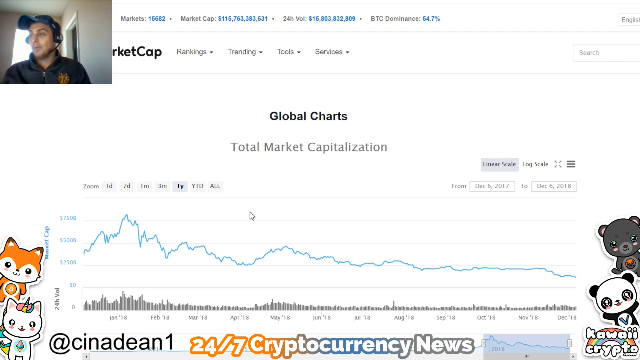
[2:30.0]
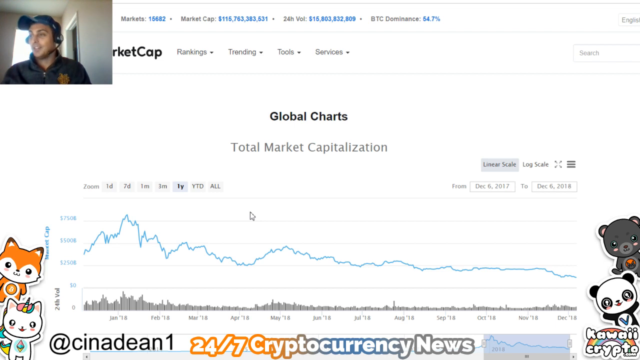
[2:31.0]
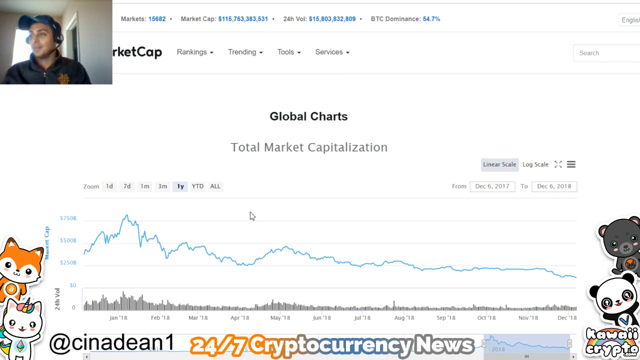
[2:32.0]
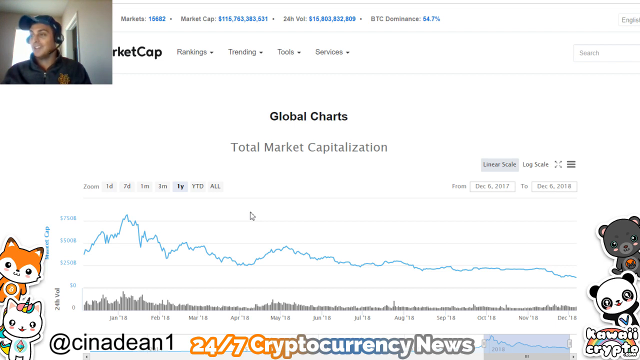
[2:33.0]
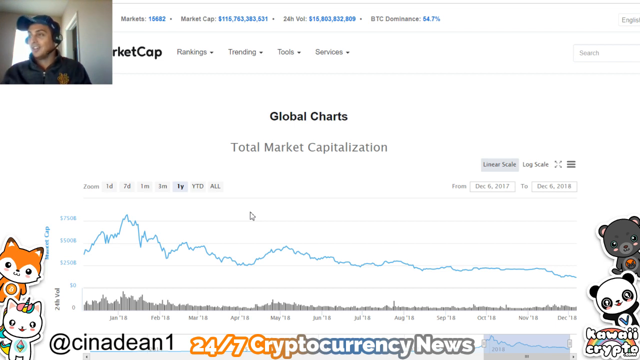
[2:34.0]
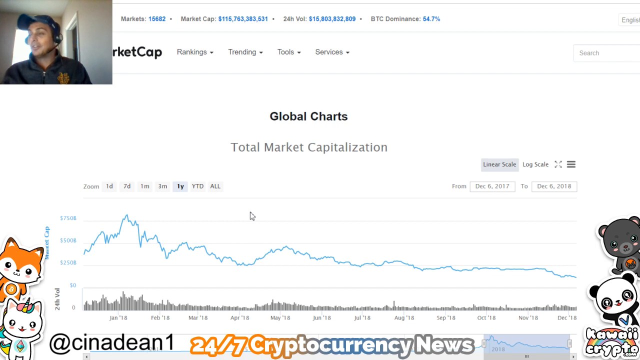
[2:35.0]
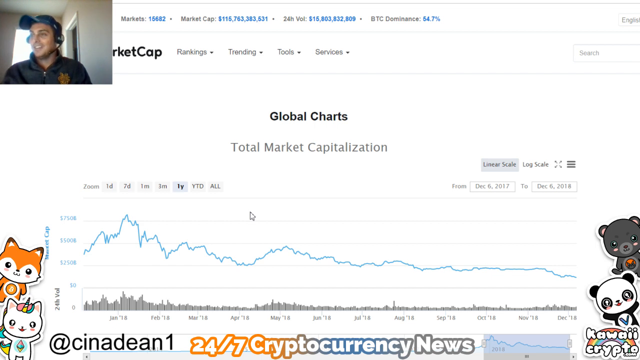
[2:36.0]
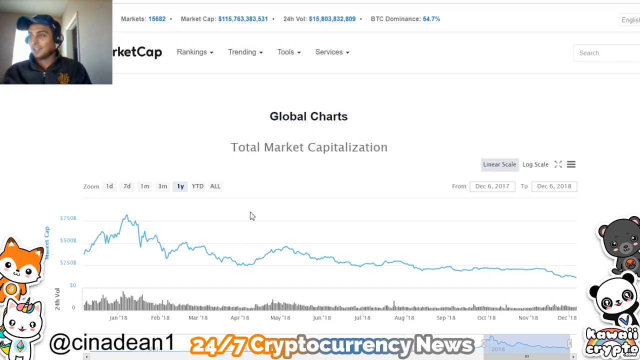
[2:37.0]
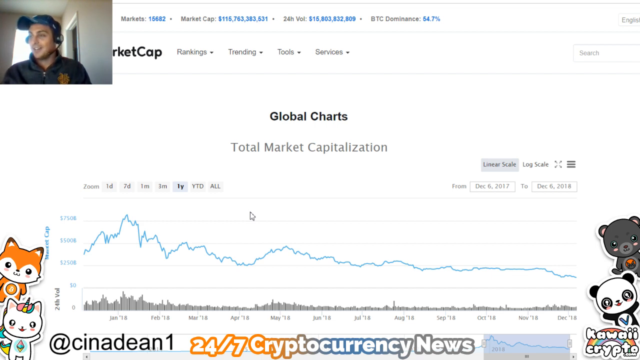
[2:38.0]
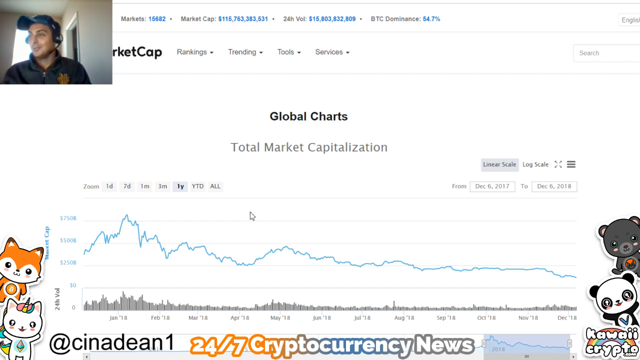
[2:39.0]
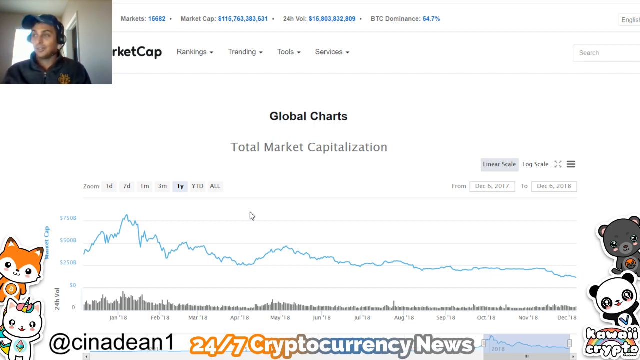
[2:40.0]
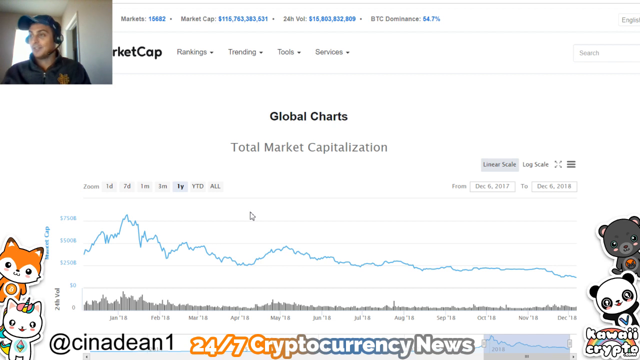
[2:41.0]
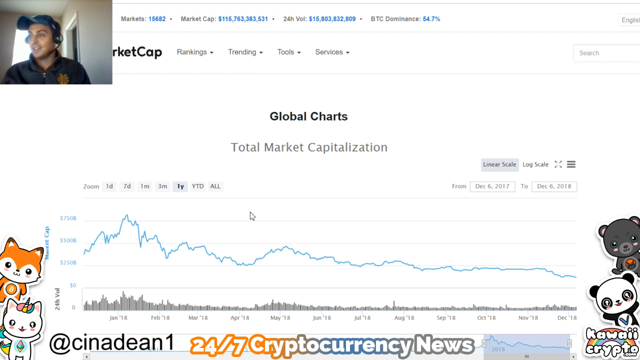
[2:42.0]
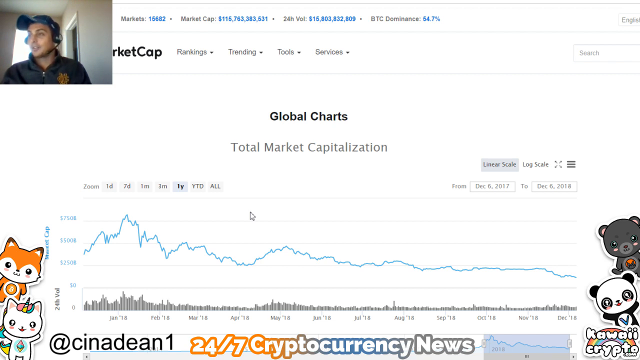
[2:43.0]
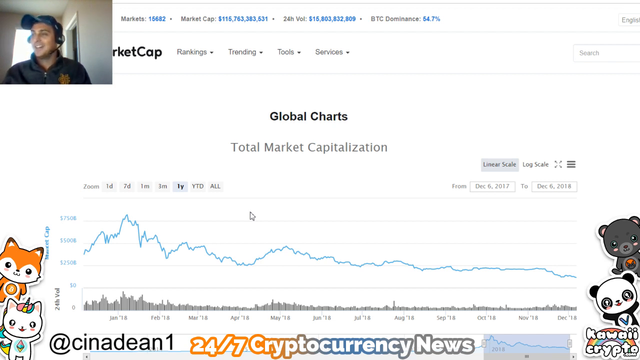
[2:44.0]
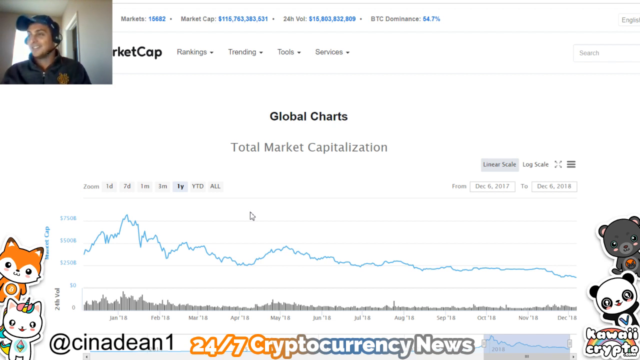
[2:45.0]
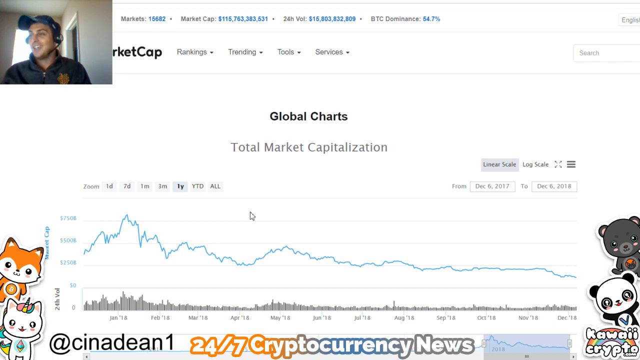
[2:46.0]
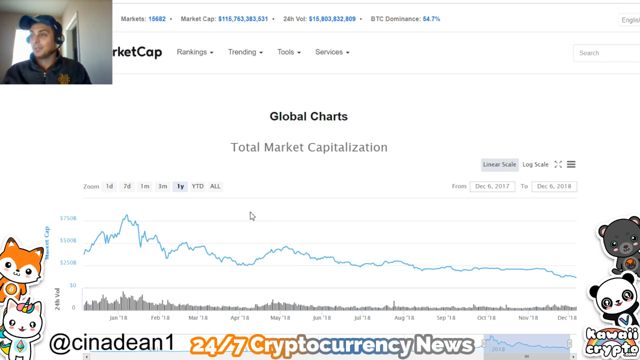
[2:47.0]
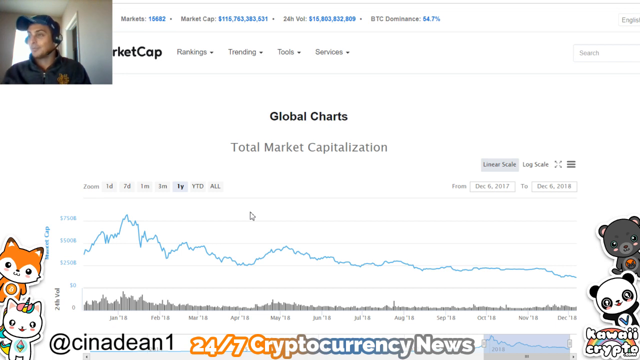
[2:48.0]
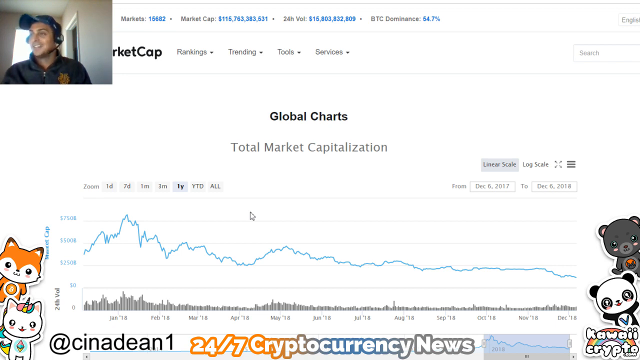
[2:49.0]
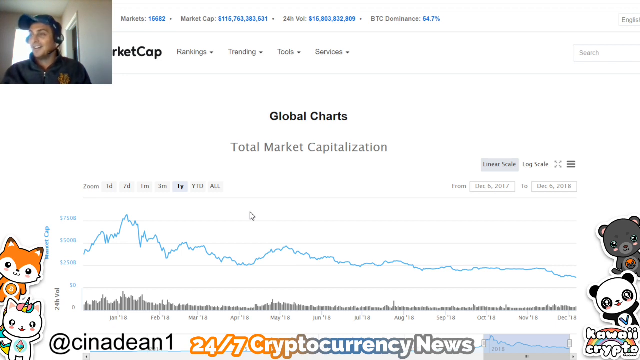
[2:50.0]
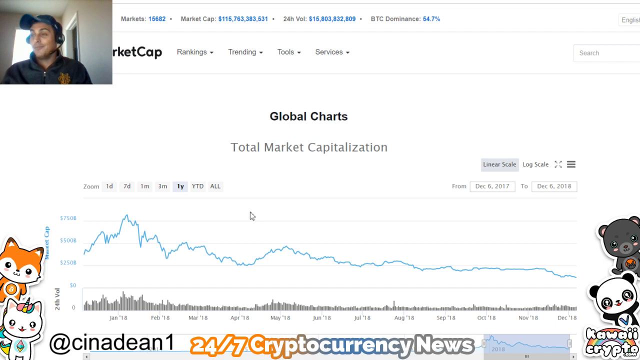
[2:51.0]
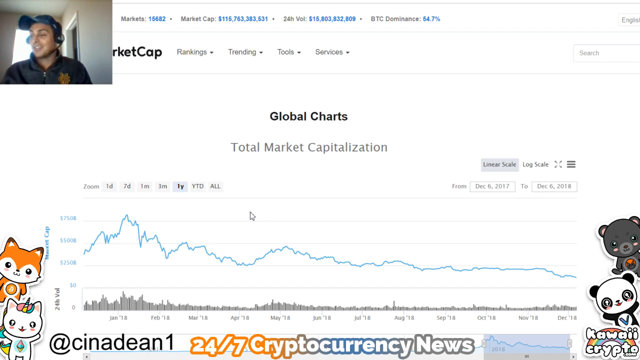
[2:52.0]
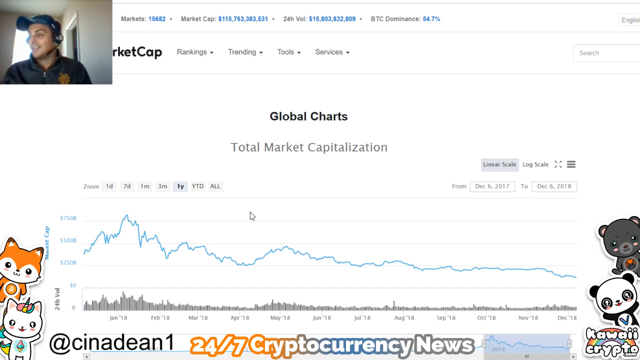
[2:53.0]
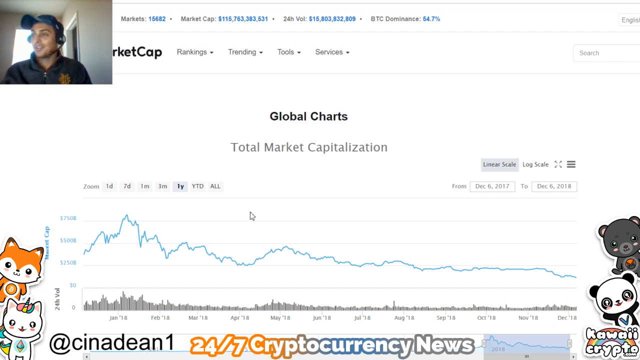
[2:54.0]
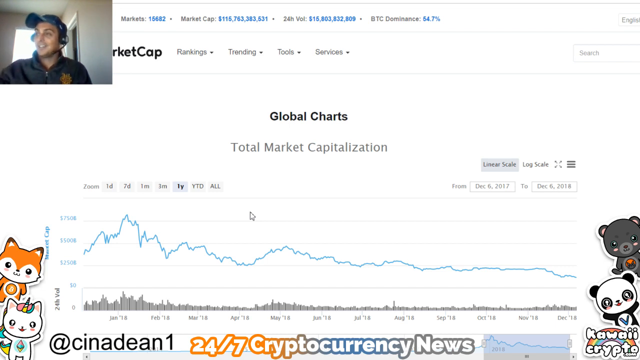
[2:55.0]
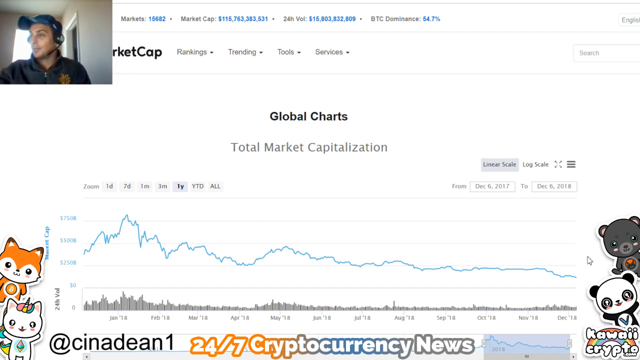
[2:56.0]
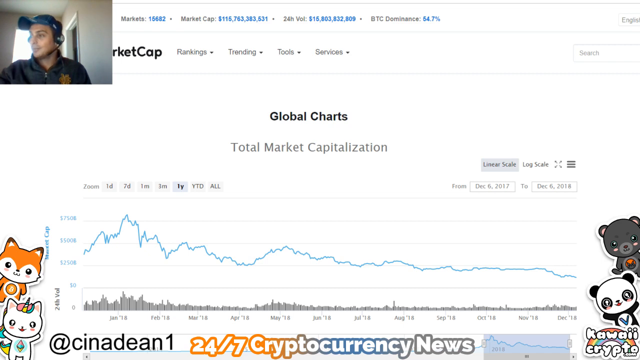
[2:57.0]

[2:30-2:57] The man remains in his little square at the top left in his dark-colored jacket, black baseball cap and headset, talking to the audience. The market cap page shows at the very top, in small text, markets 16,682, a market cap of 115,763,583,531, and BTC dominance with Bitcoin at 54.7%. The page has sorting options for rankings, trending, services and total market capitalization. There are cute animals: a panda, a little bear, a little fox and a kitty cat. A blue line graph of total market cap going back a year shows it has gone down a bit over the previous year. A watermark reading "Nadine one" is toward the bottom left corner, and "24-7 cryptocurrency news" appears in fun bright-colored letters. The man is talking, presumably about the graph.